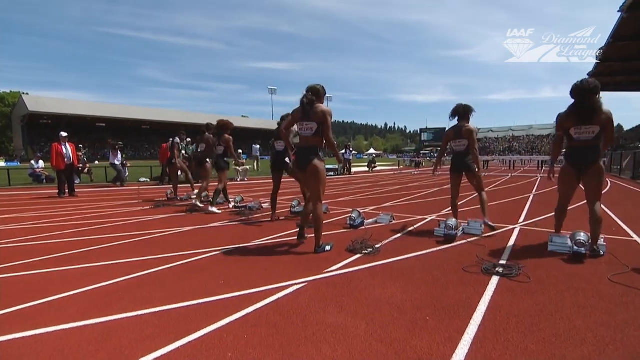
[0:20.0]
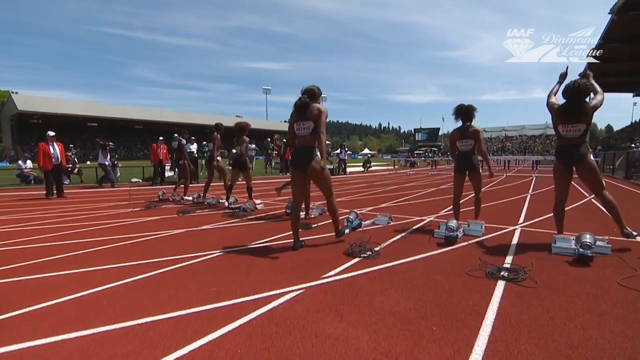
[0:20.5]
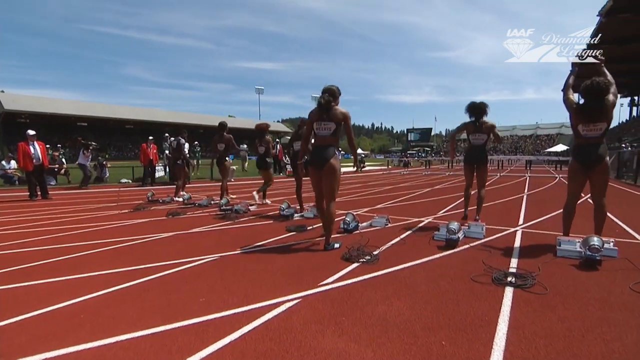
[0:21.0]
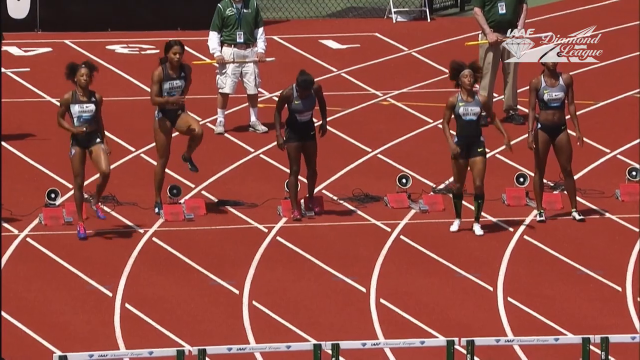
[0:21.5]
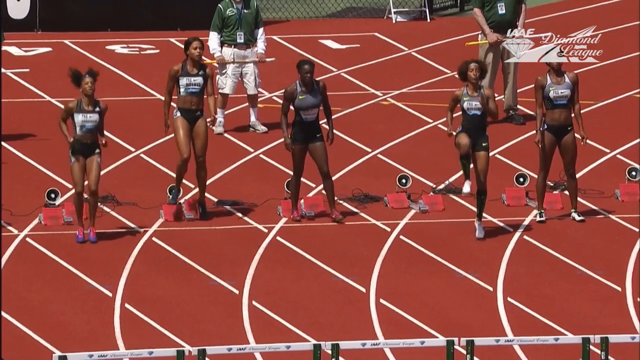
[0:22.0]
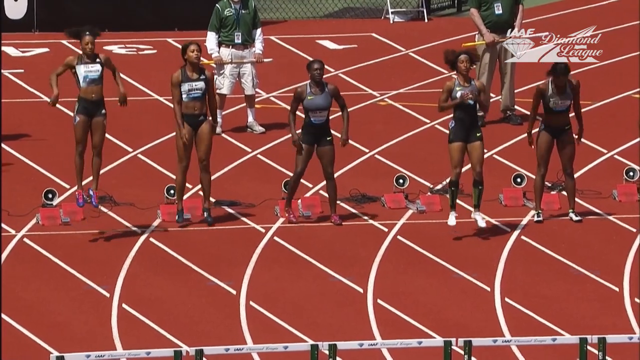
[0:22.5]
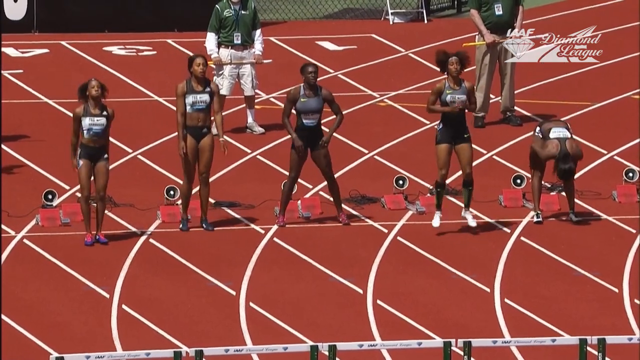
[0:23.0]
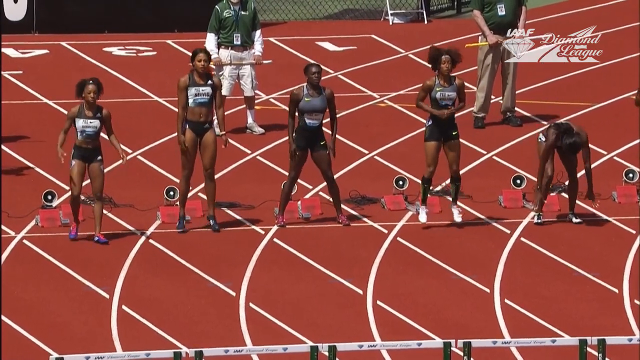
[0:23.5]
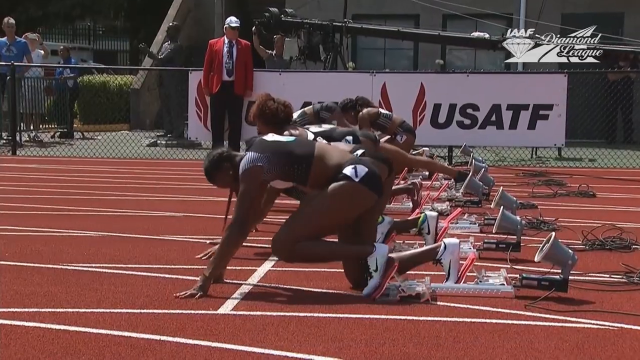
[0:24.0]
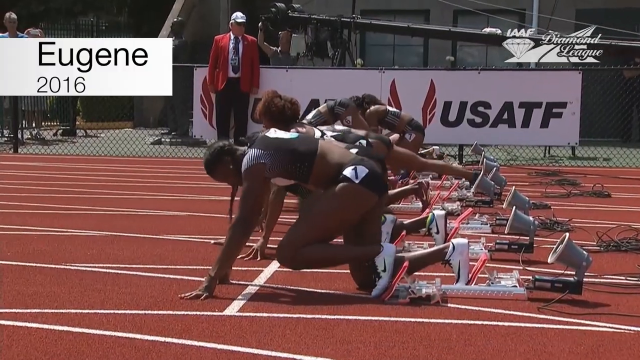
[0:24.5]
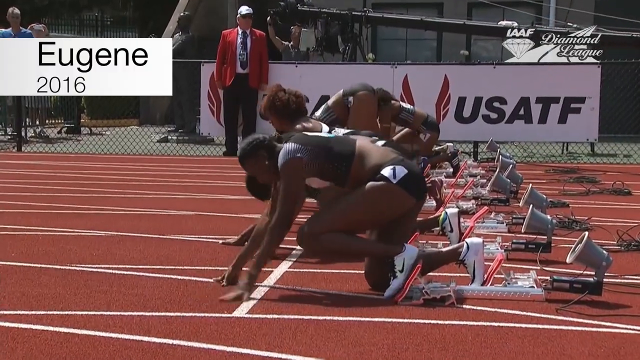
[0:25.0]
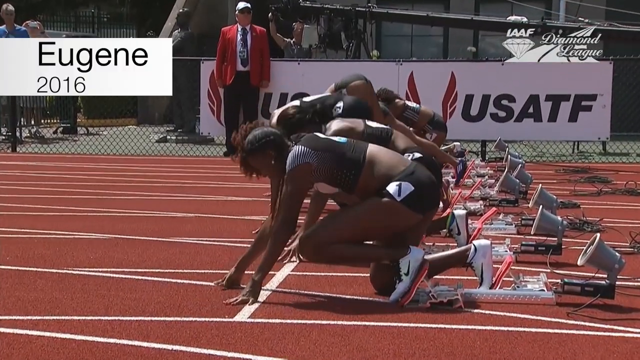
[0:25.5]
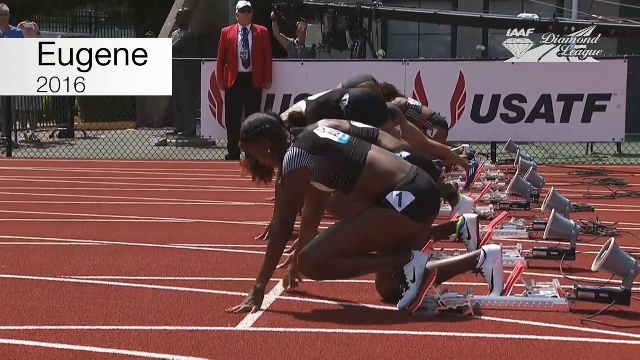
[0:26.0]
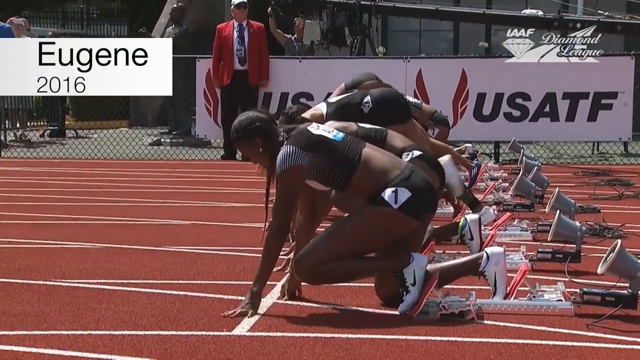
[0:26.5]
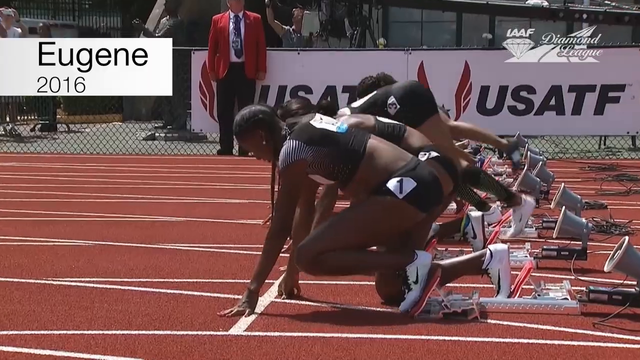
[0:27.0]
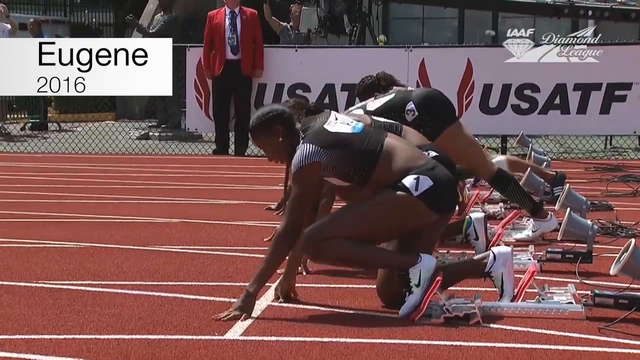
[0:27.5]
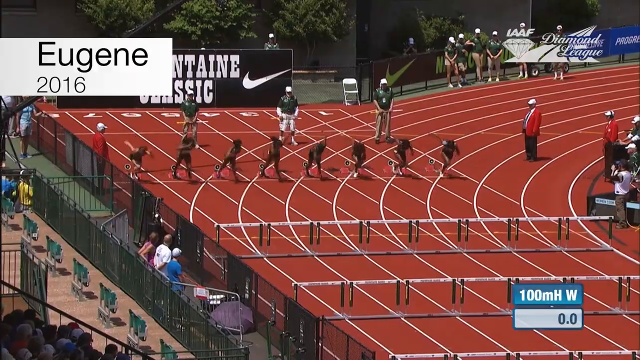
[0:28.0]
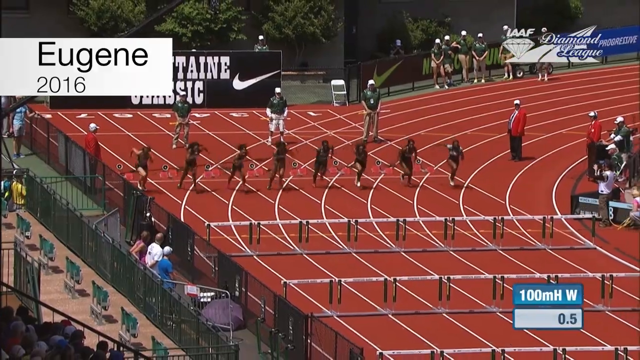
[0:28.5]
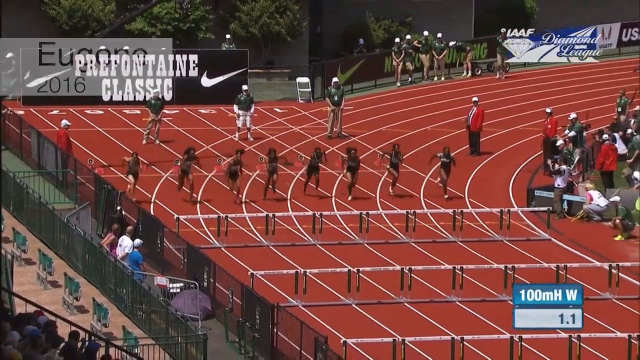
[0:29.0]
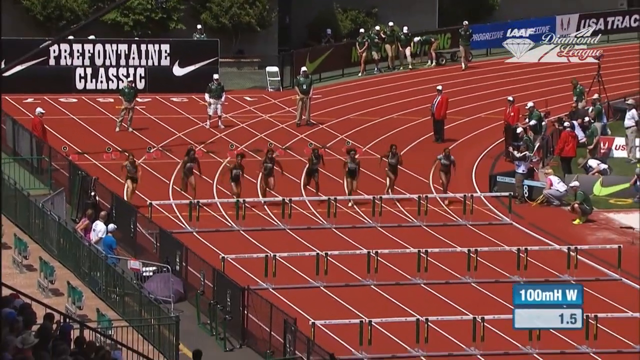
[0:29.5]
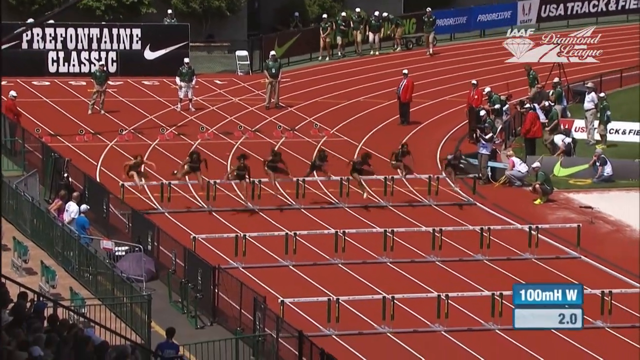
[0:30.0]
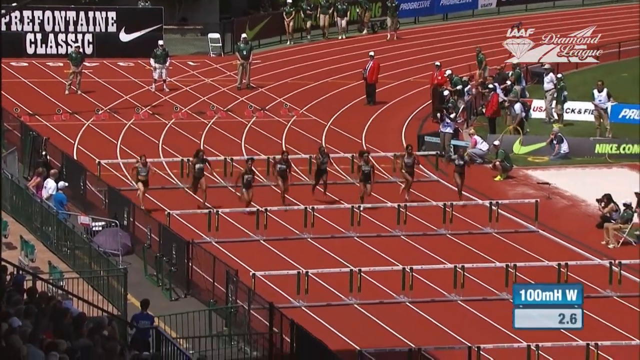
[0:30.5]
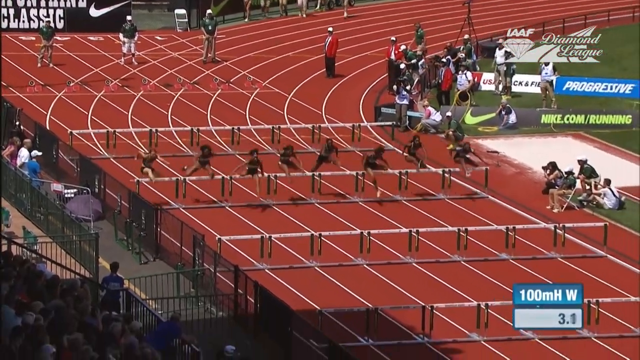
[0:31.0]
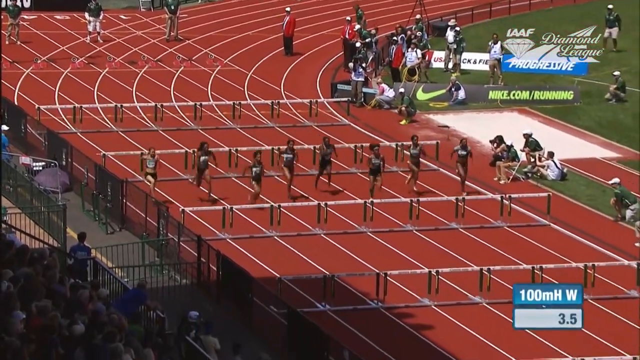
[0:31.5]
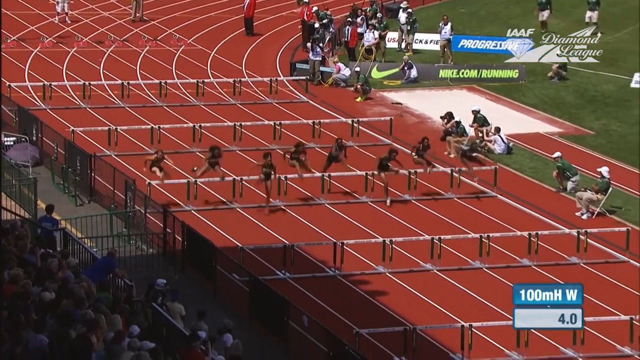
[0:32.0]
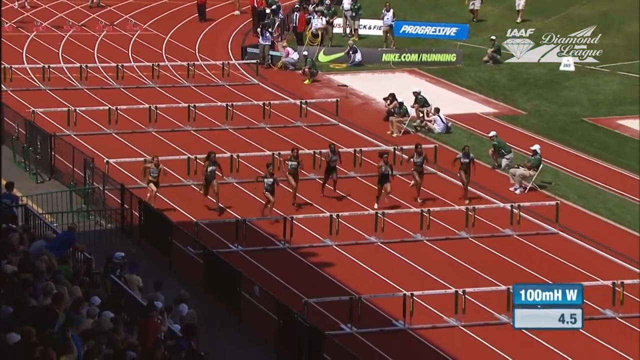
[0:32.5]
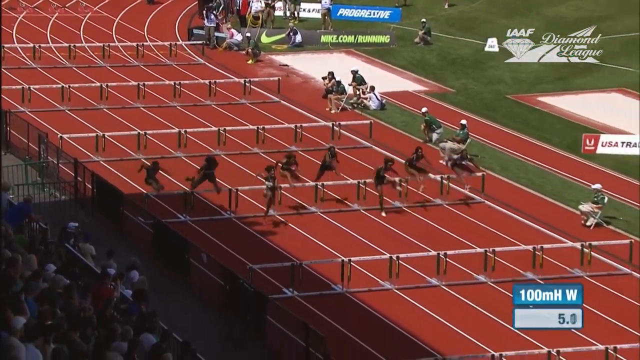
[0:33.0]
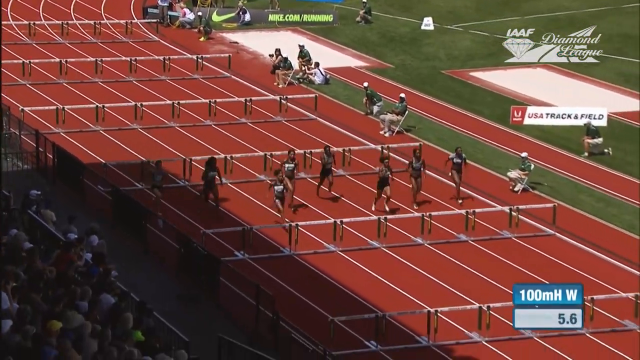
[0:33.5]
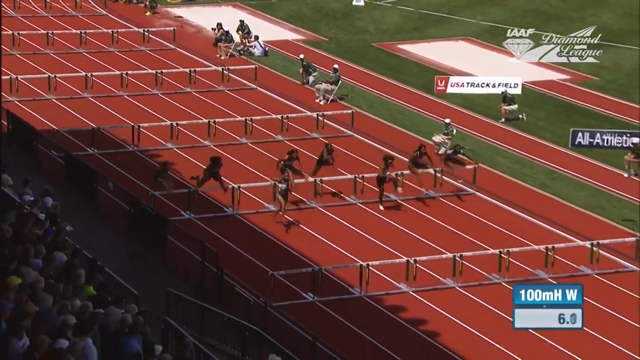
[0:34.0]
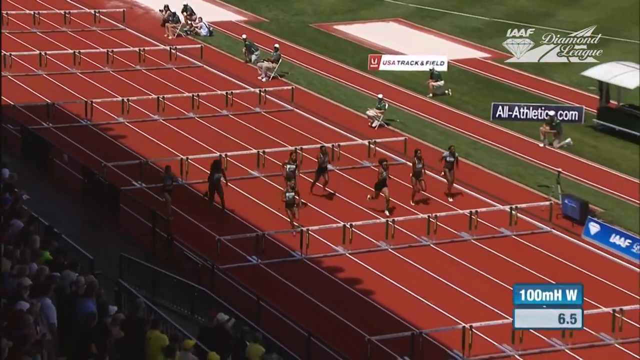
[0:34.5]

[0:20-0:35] The track event coverage continues as the camera pans out from the starting line. A graphic in the top left of the screen reads "Eugene 2016". The coverage shows the women's event and the men getting ready to start. The camera pans out from the side, and as it does, the race starts; the event looks to be the women's 100 meter hurdles. A graphic in the top right reads "IAAF Diamond League". This is apparently one event in a series of events.